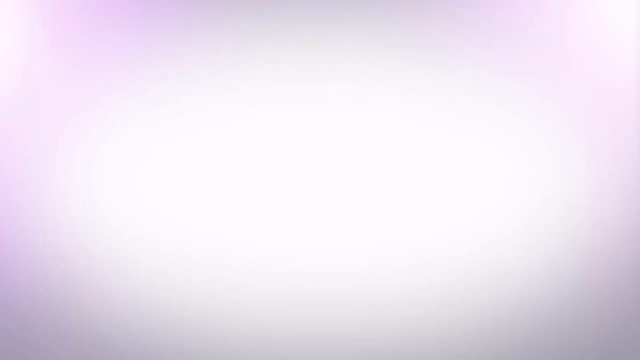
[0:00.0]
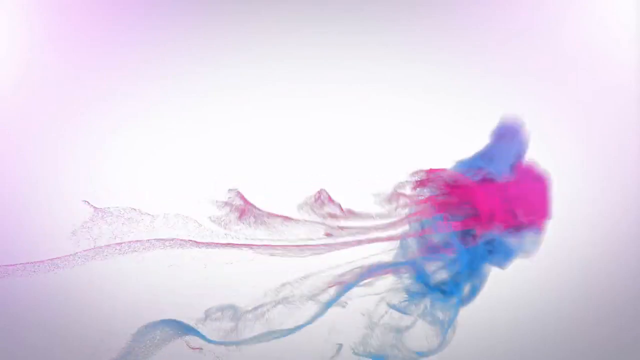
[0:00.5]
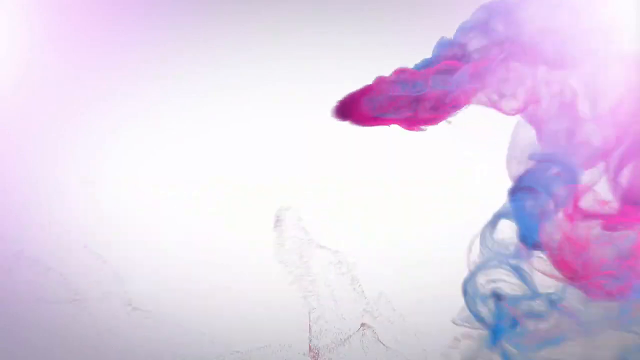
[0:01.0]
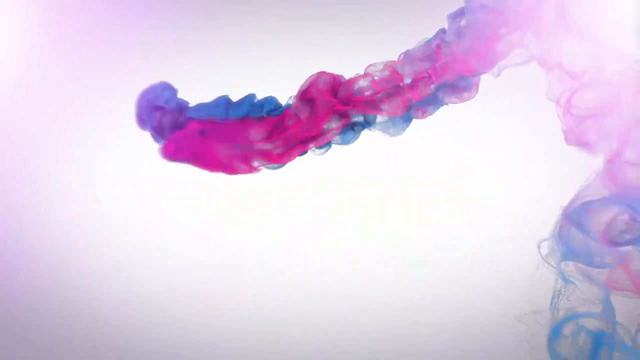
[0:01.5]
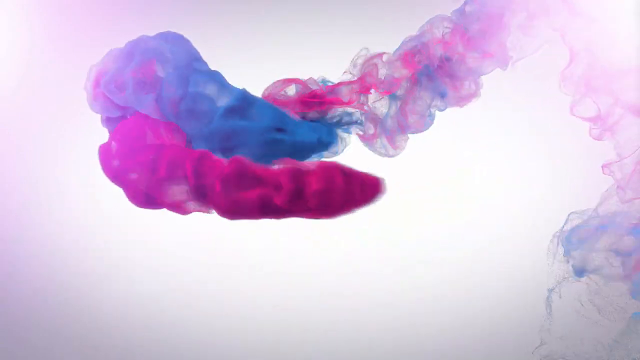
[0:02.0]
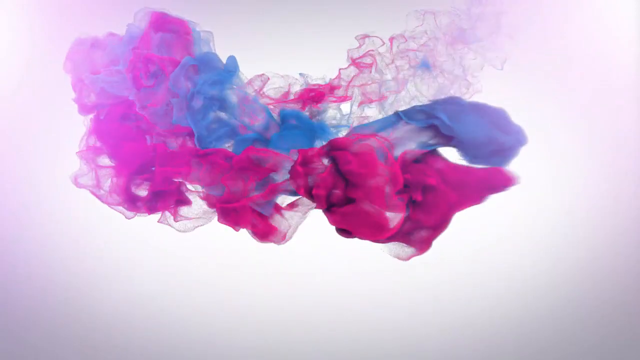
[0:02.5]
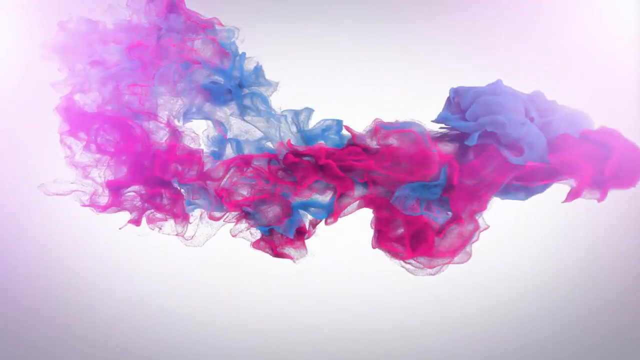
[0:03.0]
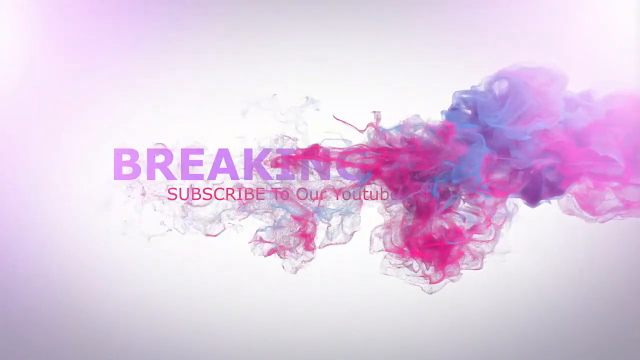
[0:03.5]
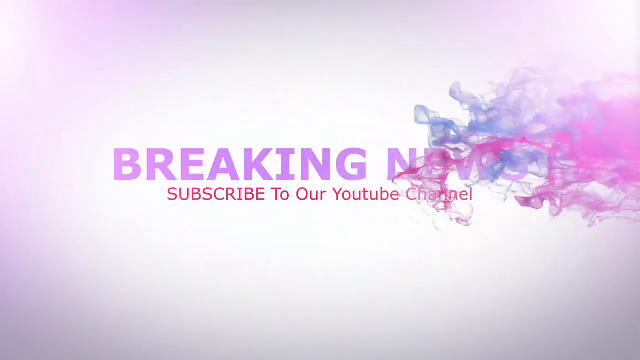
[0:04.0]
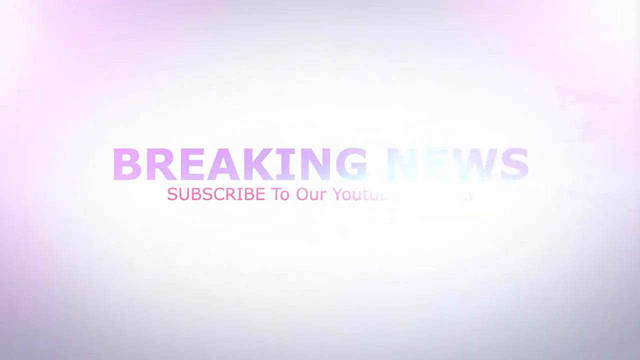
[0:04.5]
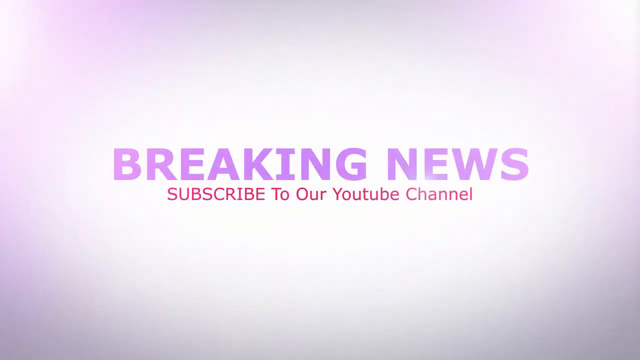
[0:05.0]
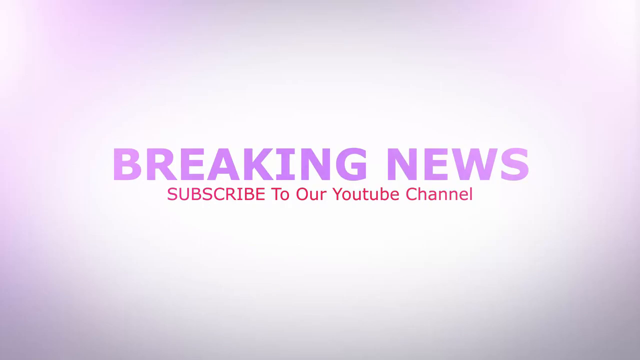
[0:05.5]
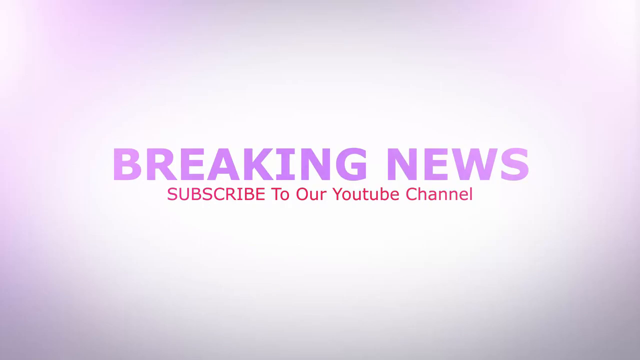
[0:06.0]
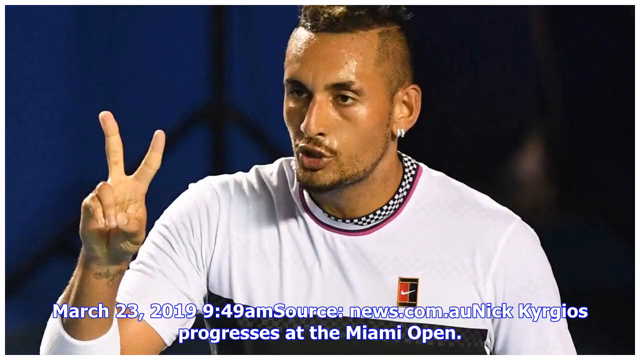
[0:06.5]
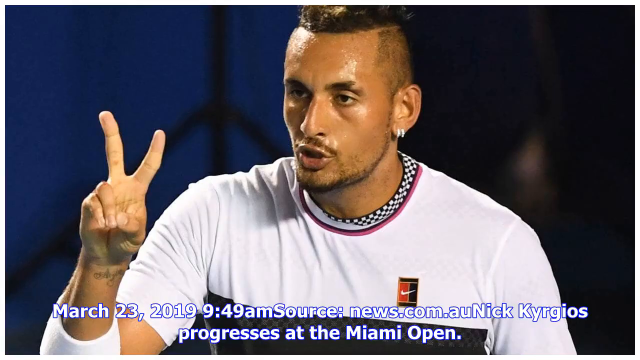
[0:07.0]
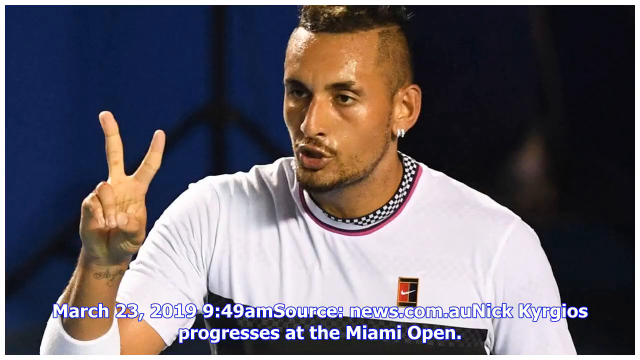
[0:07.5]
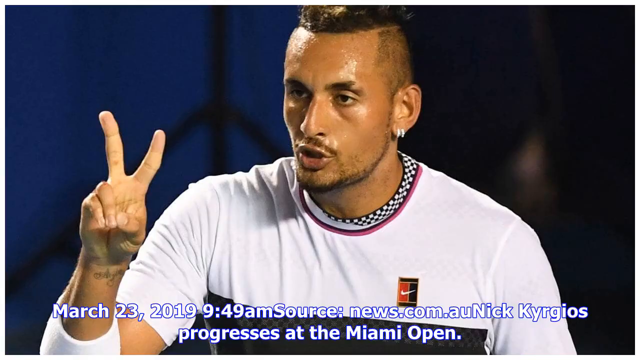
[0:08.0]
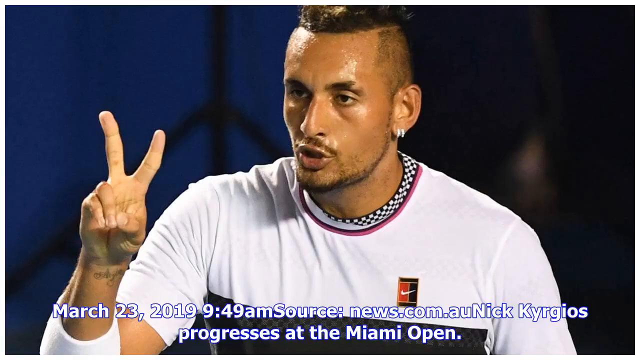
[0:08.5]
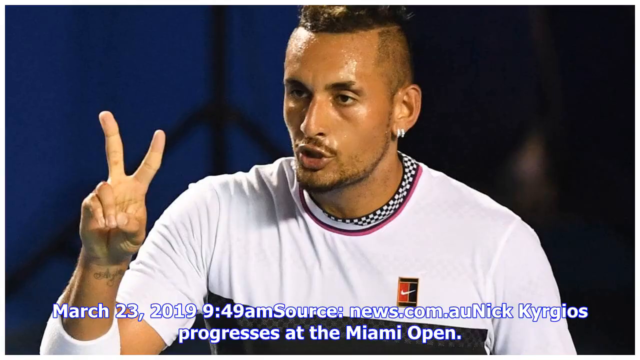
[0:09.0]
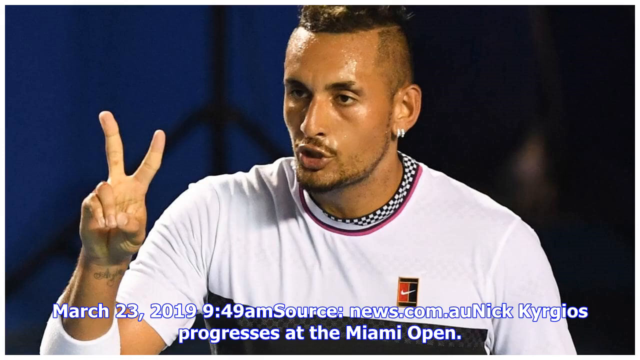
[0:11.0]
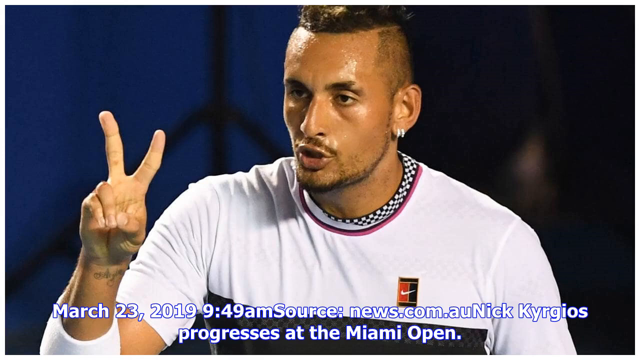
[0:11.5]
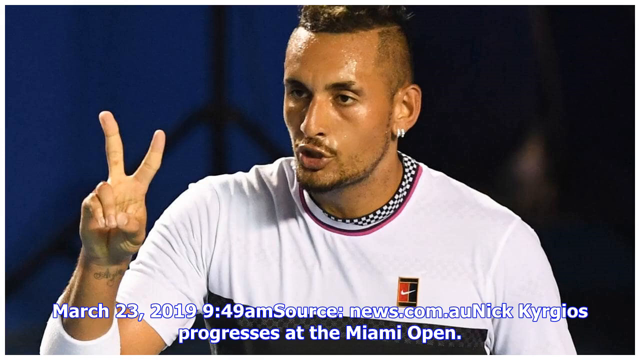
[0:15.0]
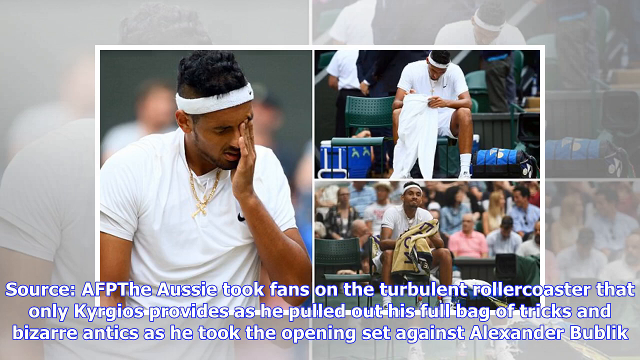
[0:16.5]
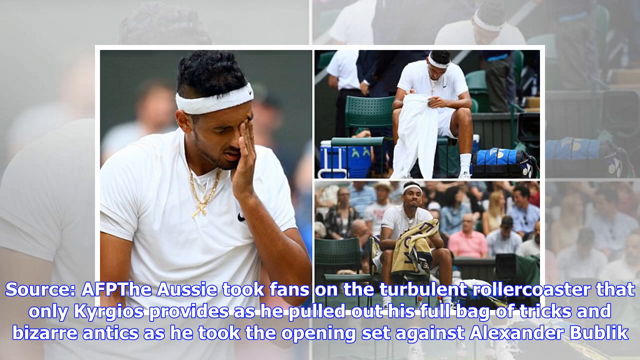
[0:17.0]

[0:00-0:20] An intro shows "breaking news" and "subscribe to our youtube channel." Then a picture appears of a man who is apparently Nick Kyrgios, the tennis player. He makes a peace sign, which could also be a two. He wears a bandana on his head and a Nike shirt, looks intense and very sweaty, and is probably in the middle of a game. A few more pictures follow of him during a break in a match, looking frustrated. The content seems to be a news article, with text reading "The Aussie took fans on a turbulent roller coaster," shown with a picture of him sitting in a chair with his towel.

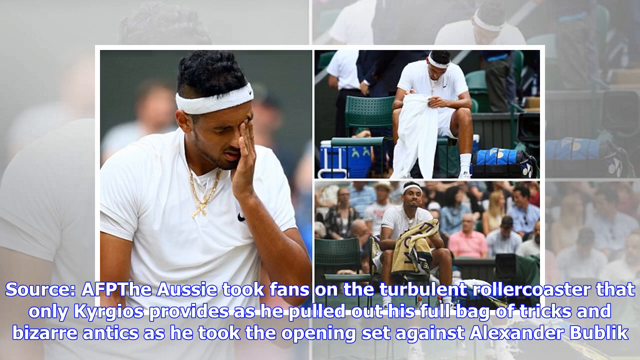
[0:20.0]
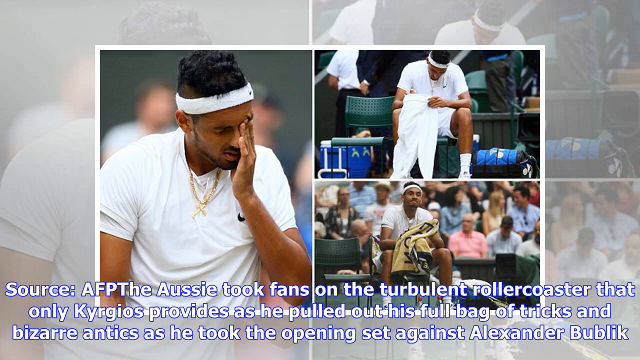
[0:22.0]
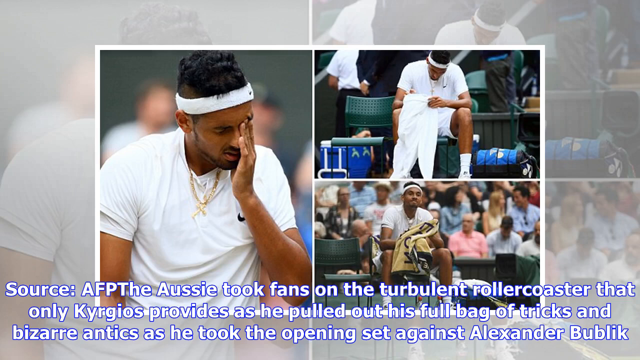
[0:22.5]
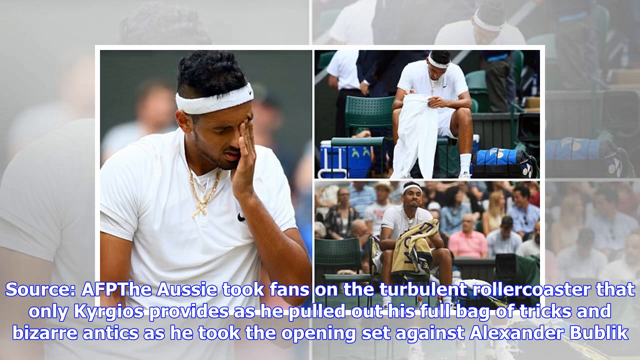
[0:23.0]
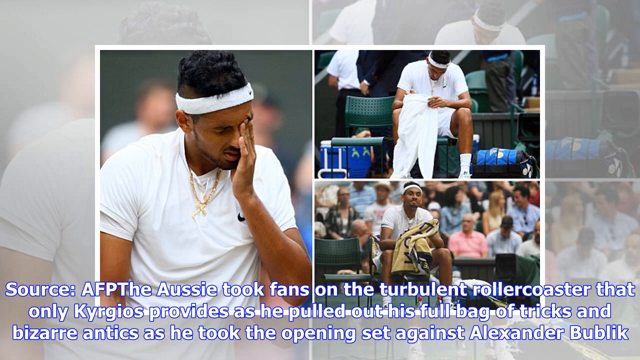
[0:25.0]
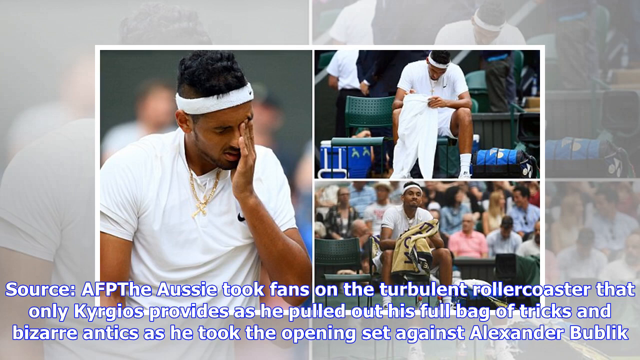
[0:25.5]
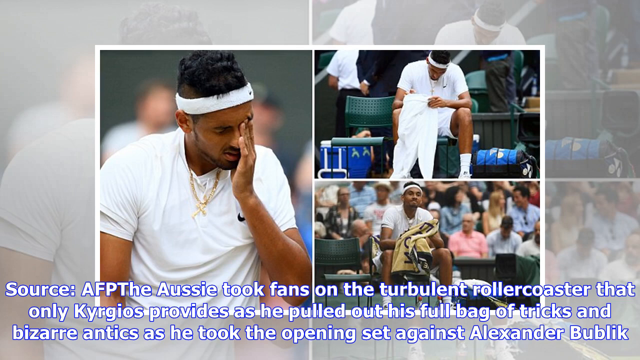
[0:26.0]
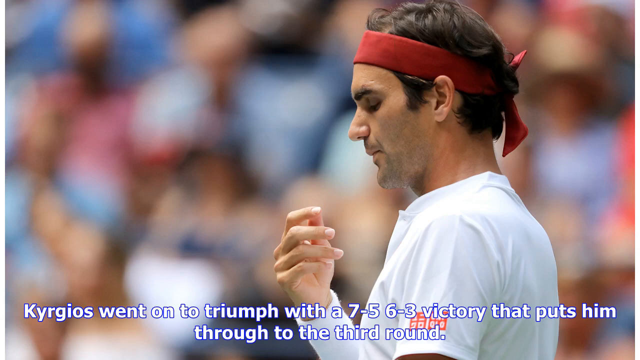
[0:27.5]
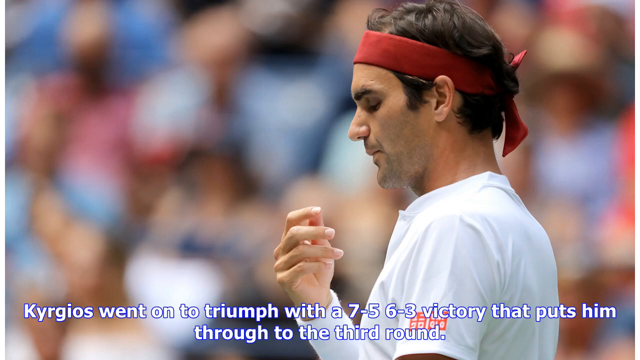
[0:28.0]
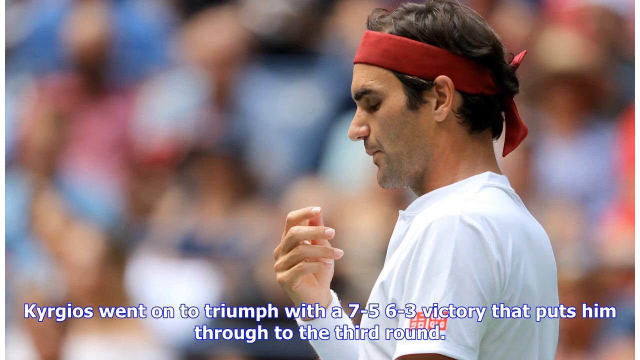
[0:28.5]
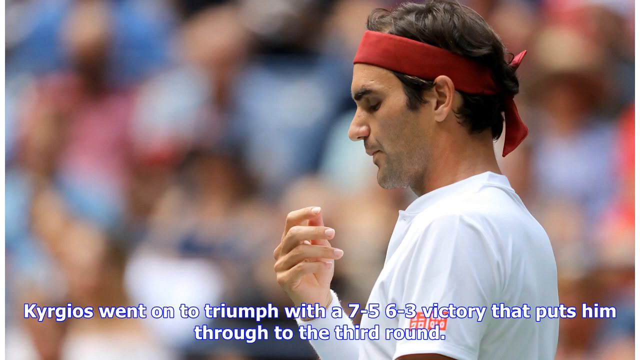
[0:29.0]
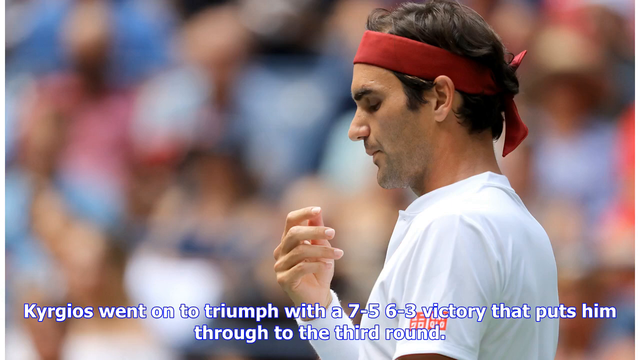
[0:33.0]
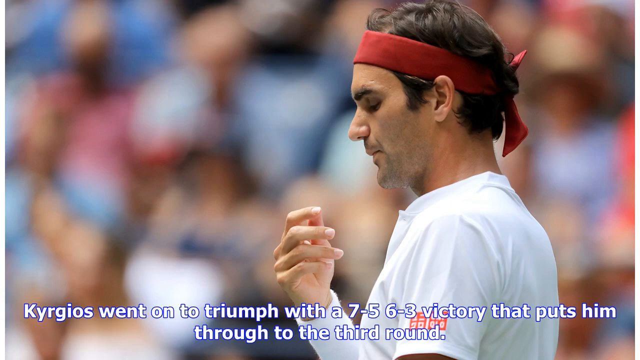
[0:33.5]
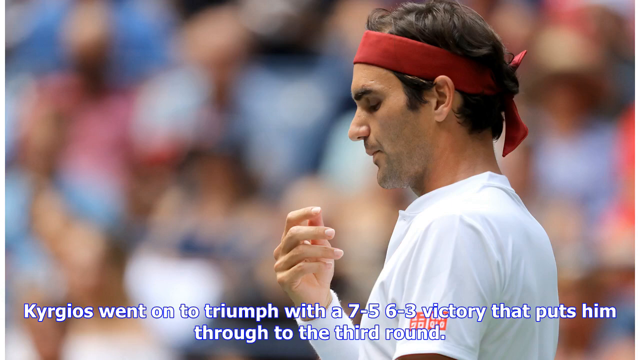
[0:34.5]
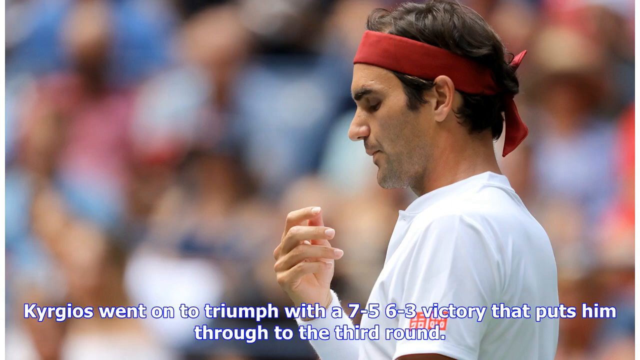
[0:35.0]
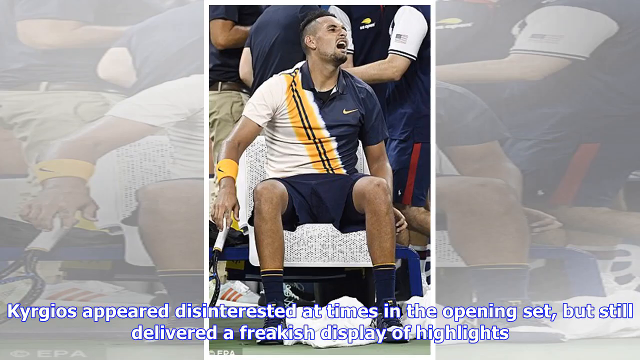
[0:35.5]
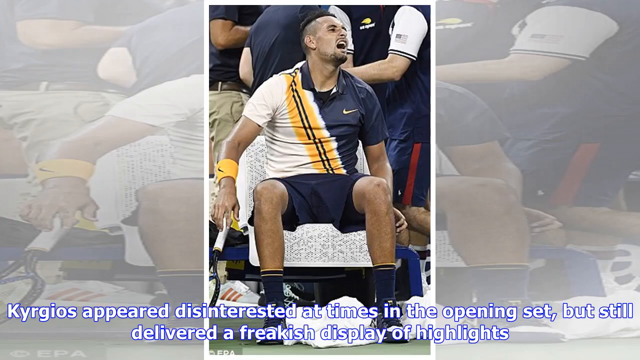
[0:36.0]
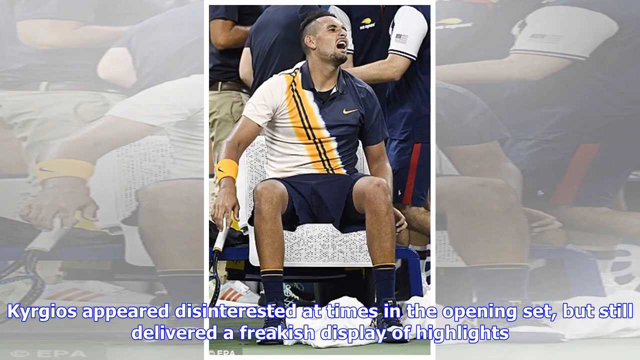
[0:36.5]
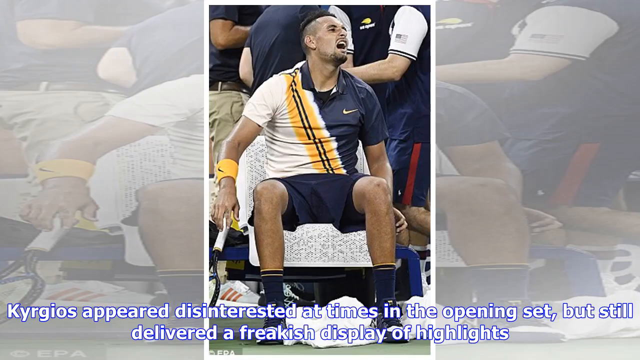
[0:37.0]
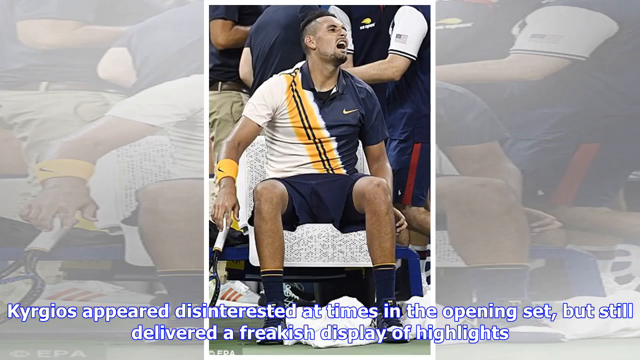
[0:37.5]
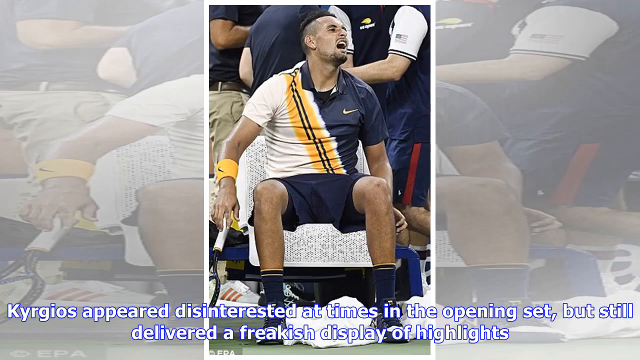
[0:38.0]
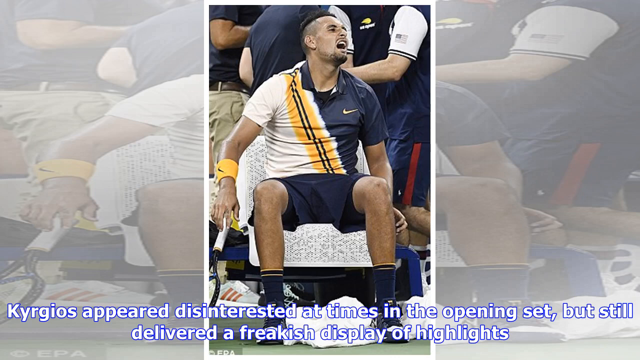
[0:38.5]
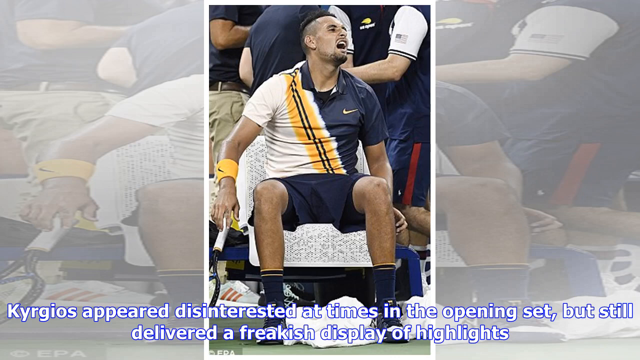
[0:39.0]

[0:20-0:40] The article continues. A picture of Roger Federer appears with text saying Kyrgios won with "a 7-5, 6-3 victory that puts him through to the third round." It is immediately followed by another picture of Kyrgios, who seems even more mad and frustrated, with the text "Kyrgios appeared disinterested at times in the opening set but still delivered the freakish display of highlights." He looks like he is throwing a tantrum, wears another Nike t-shirt, and is possibly about to drop or smash his racket. He seems to be shouting or screaming at someone, apparently during a break in a match.